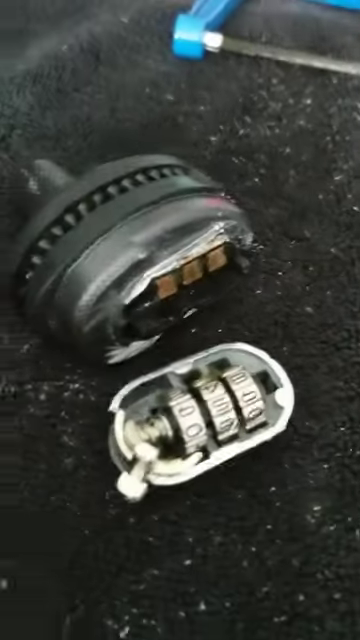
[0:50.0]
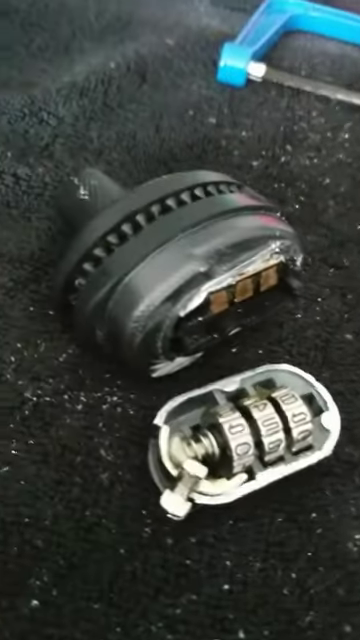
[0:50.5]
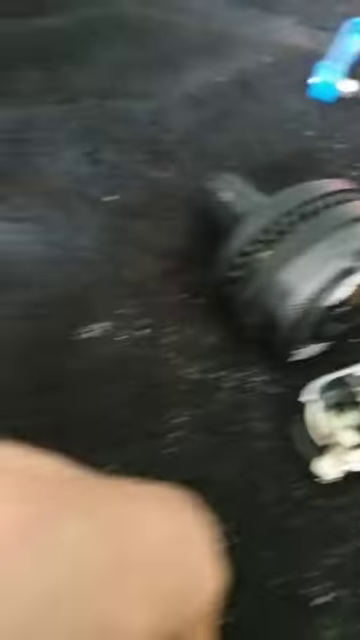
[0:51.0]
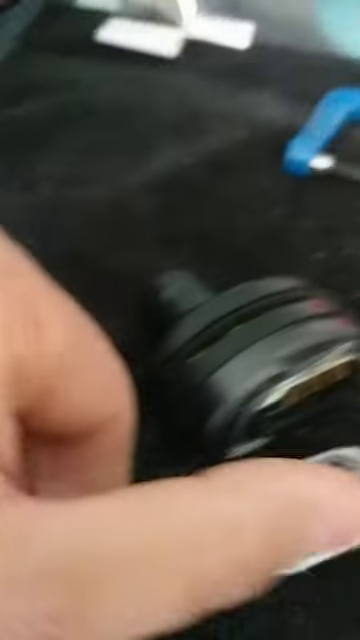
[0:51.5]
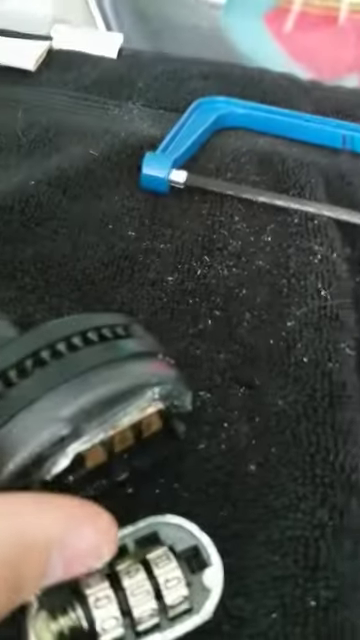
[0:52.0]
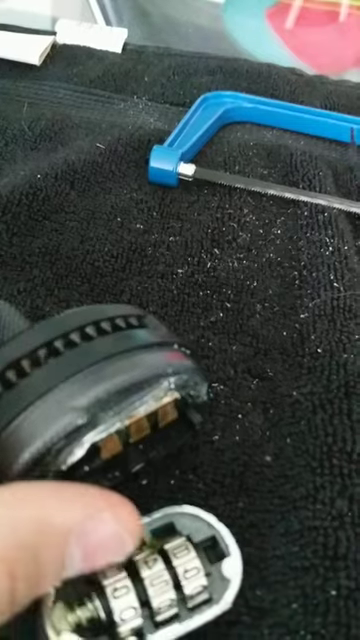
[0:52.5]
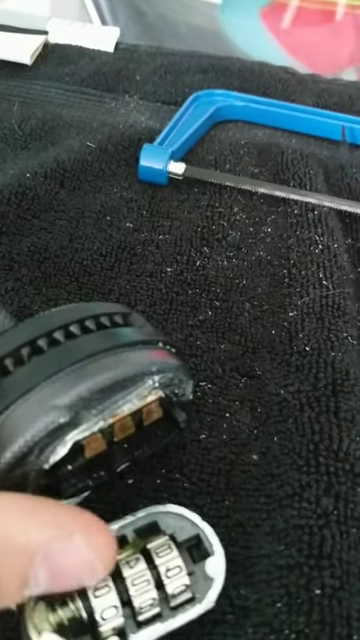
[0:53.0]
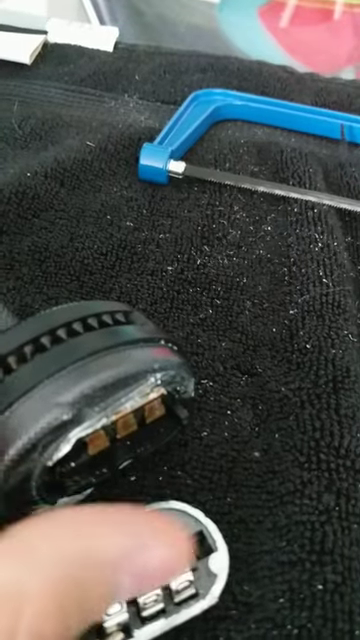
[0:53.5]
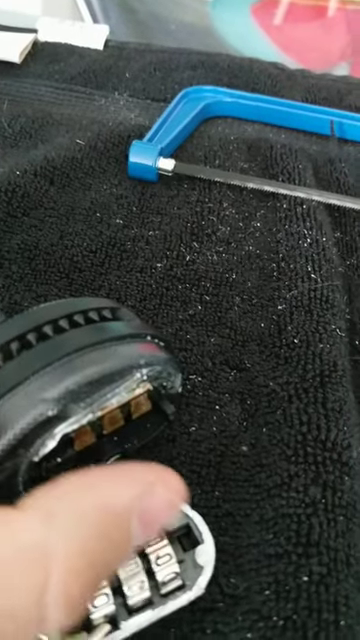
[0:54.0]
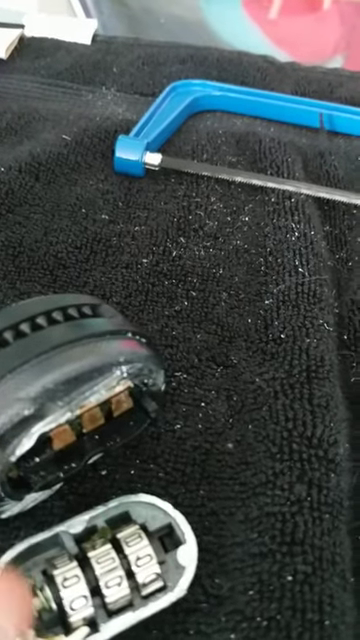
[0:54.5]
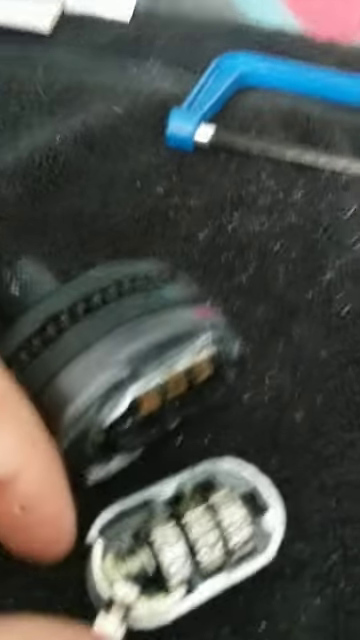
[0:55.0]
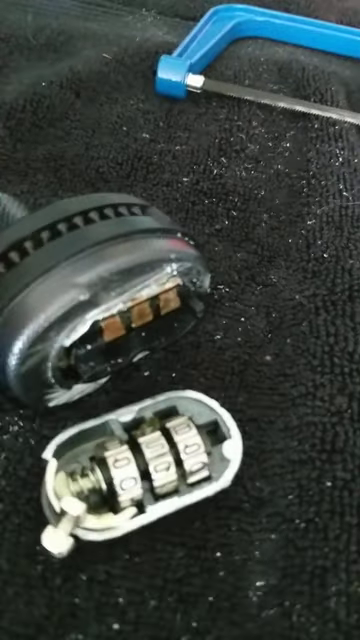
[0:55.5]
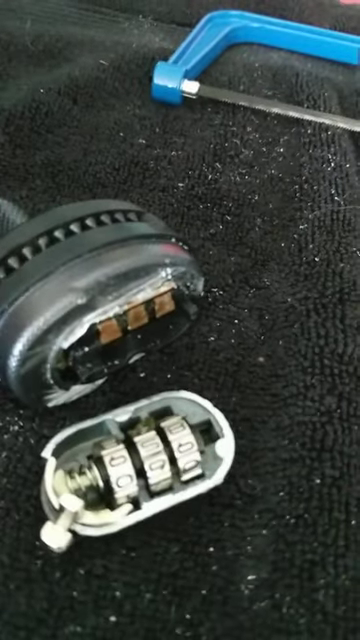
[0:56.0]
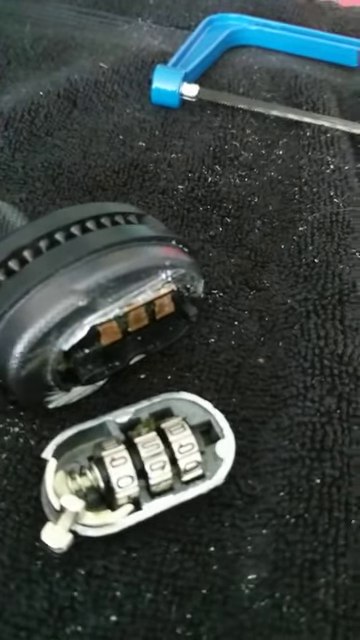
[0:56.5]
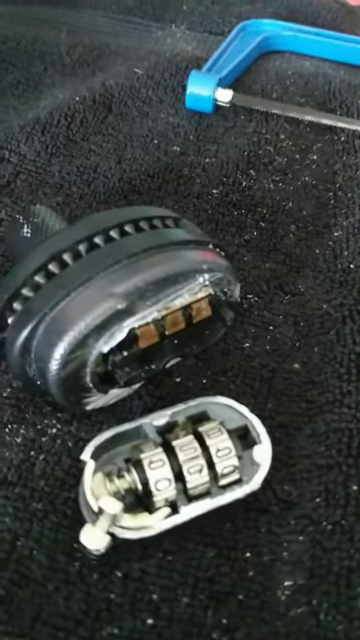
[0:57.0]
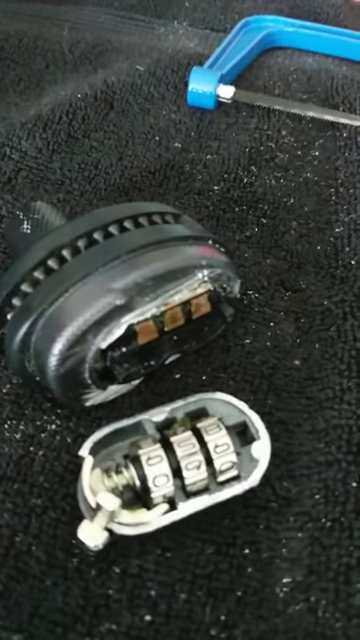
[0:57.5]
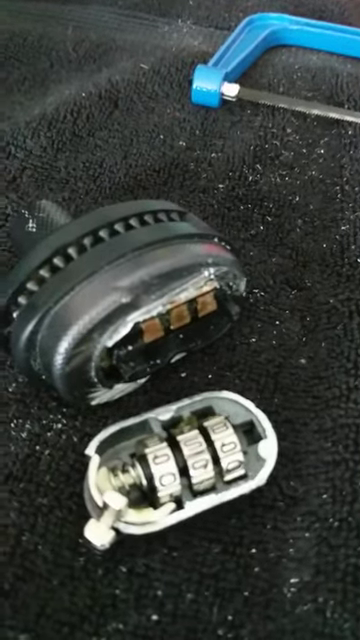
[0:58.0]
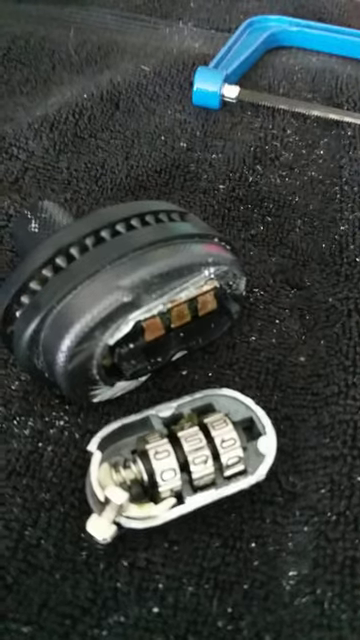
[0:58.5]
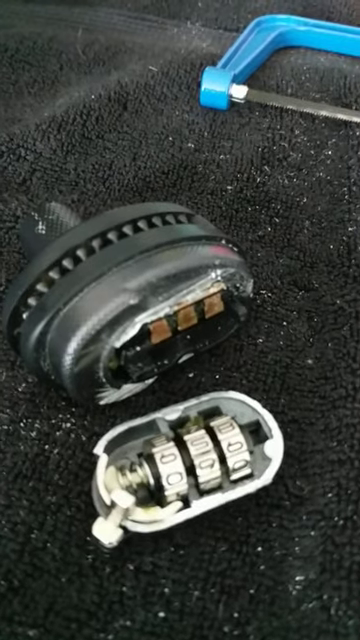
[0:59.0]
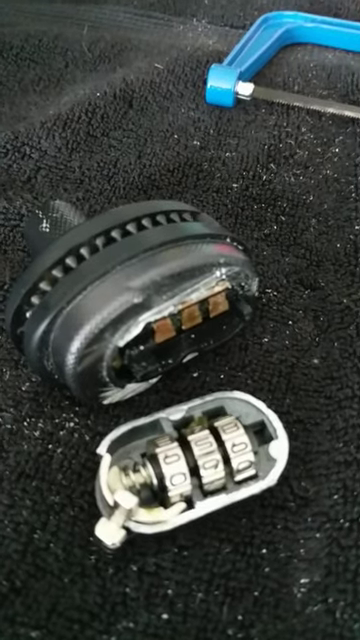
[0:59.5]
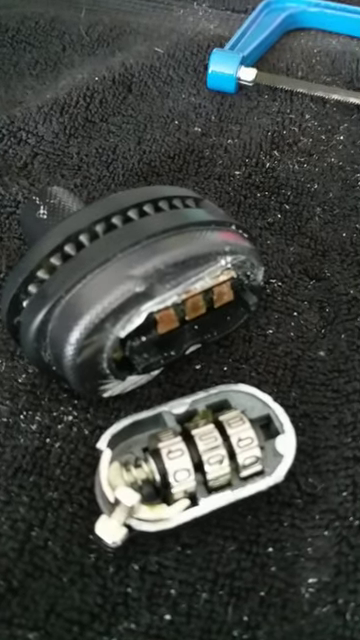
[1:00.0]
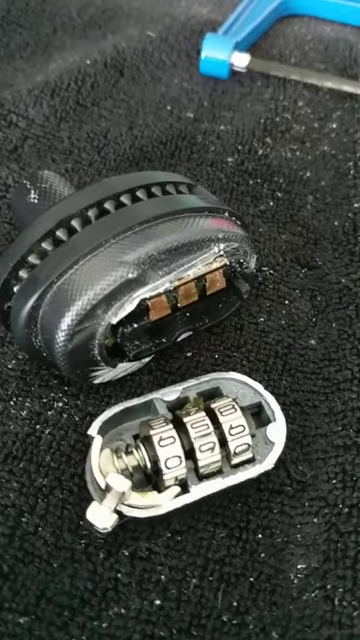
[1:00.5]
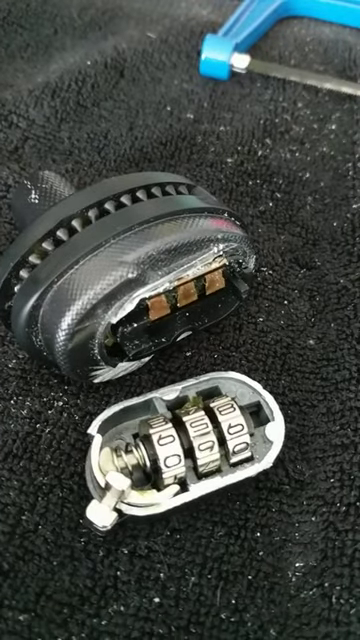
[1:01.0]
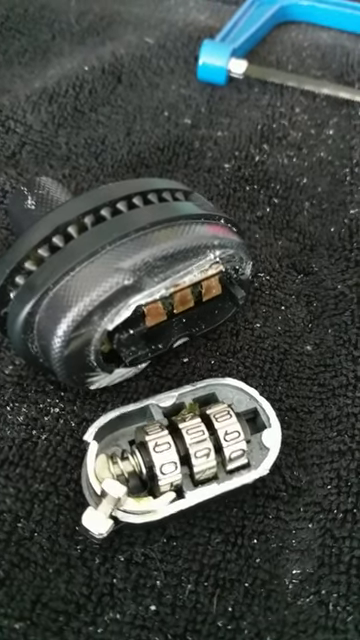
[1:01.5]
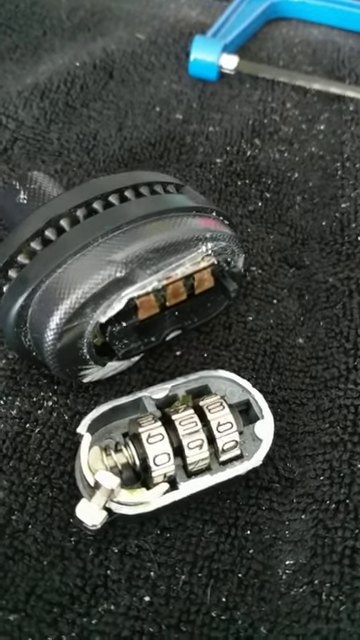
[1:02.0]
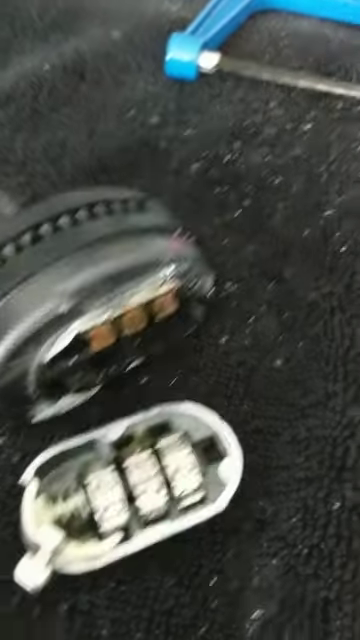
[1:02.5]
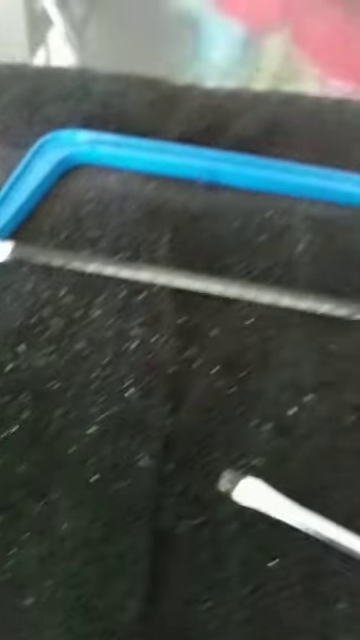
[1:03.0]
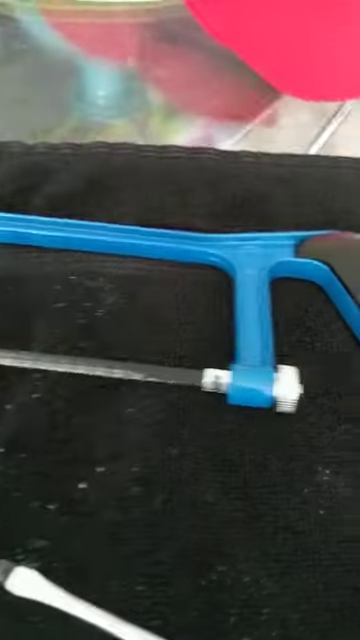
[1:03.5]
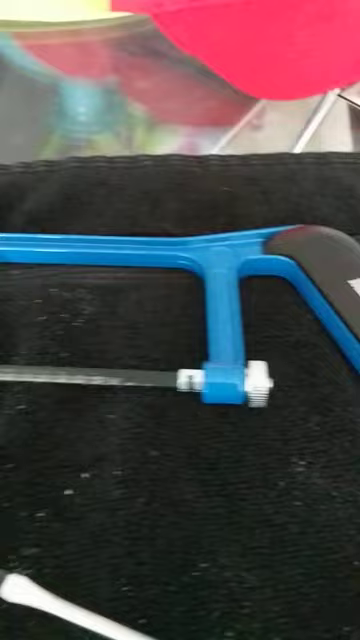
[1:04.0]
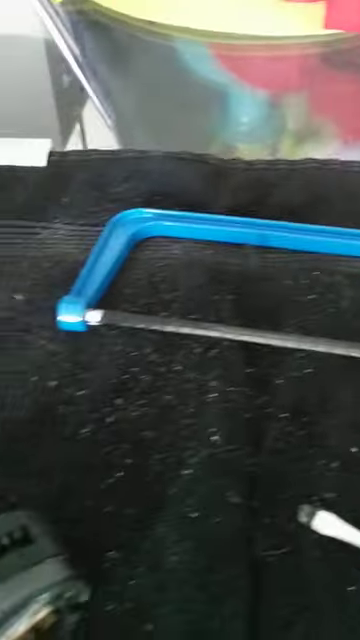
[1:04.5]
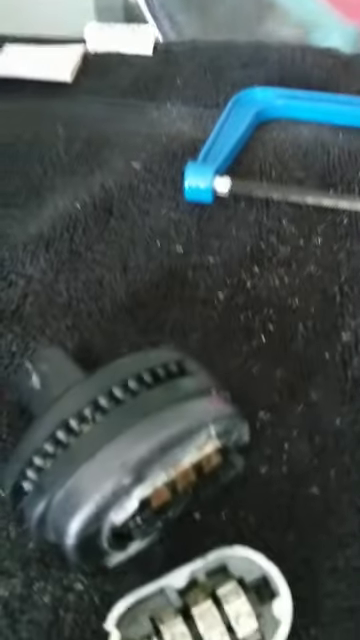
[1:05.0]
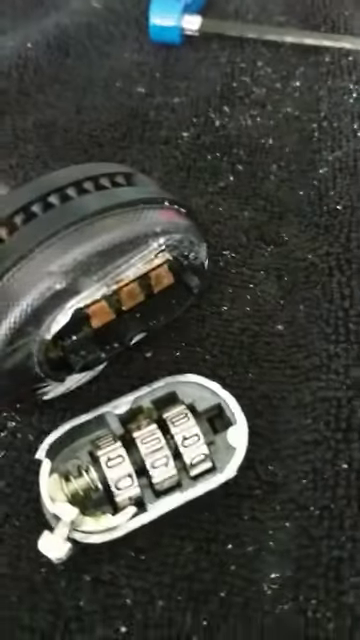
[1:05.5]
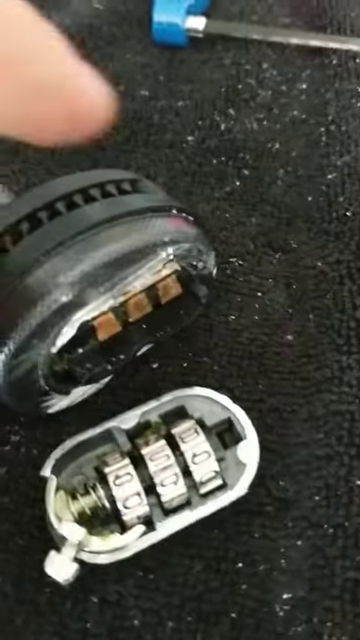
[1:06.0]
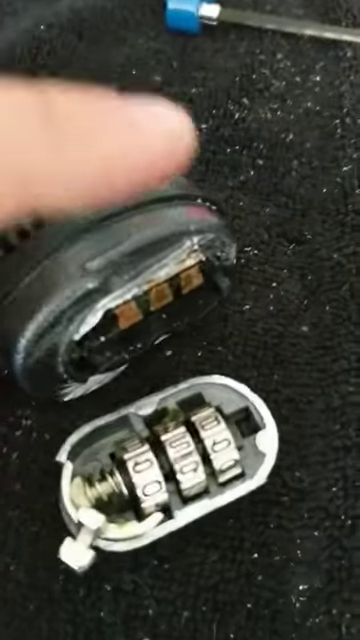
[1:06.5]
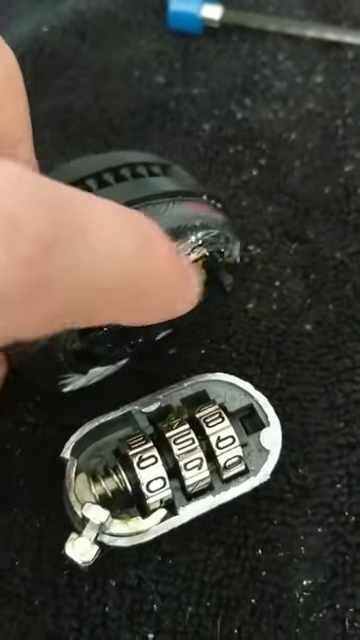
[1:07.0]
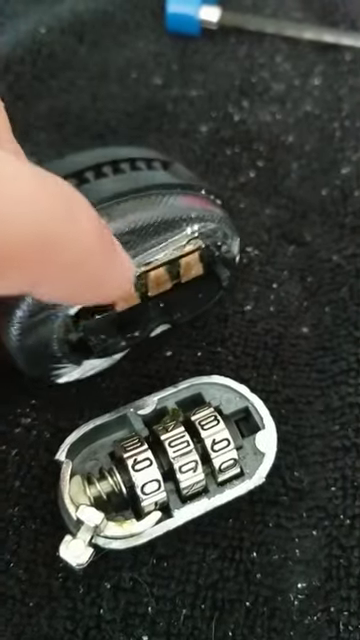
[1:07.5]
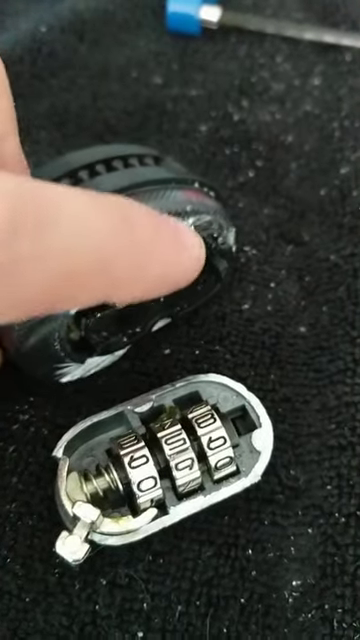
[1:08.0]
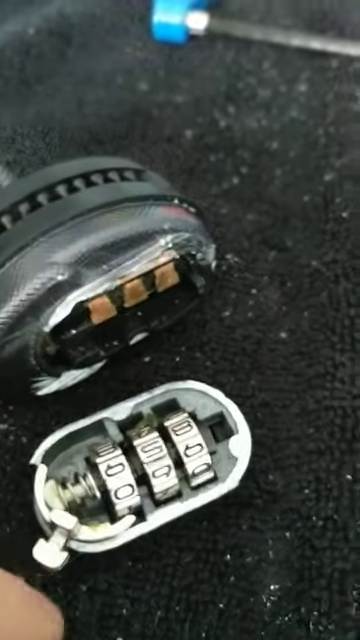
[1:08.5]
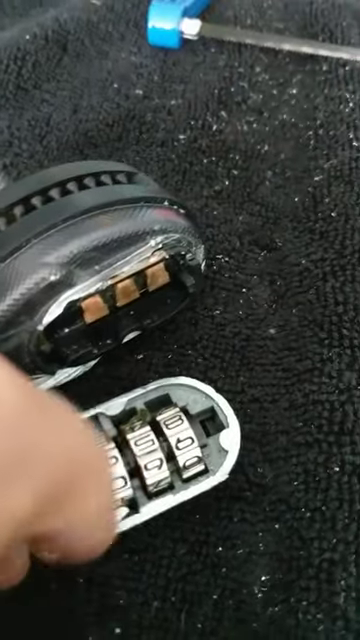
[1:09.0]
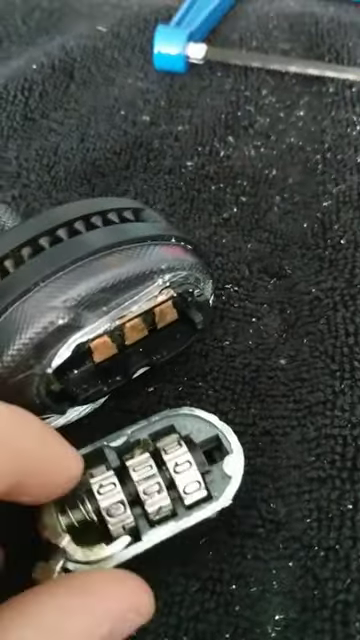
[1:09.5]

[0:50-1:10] Both parts of the key lock are visible: the metallic portion with a protruding knob and three rows of numbering, and the bigger damaged chunk with its underside showing the motherboard and its black handle. All are on the black, uneven surface. The hand touches the metallic part and flips around the numbering, and also places a finger on the motherboard section of the larger chunk. The video zooms out to show the blue handle of the tool on the uneven surface, revealing the full view of a hacksaw with a blue handle and a sharp metal line connected to it. The video also zooms out to reveal a metal screwdriver, its bottom part on the uneven black background. At the top of the frame, a pink object is visible outside the black textured background. The video zooms back in to show the finger rubbing on the larger chunk of the damaged key lock.